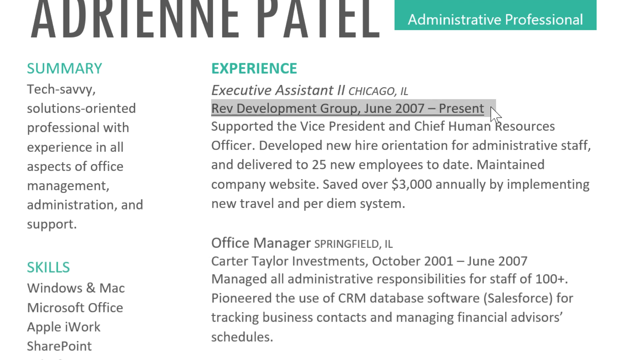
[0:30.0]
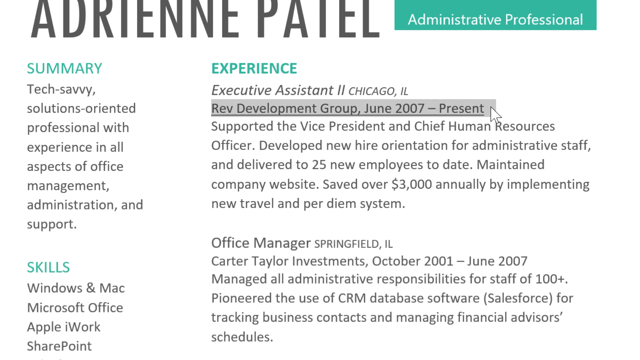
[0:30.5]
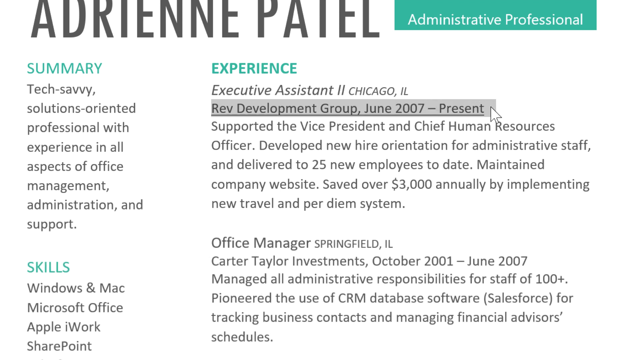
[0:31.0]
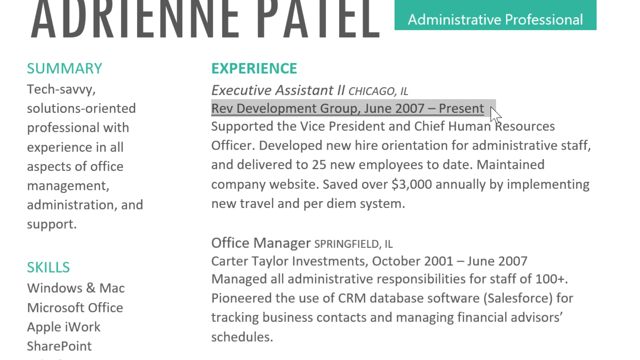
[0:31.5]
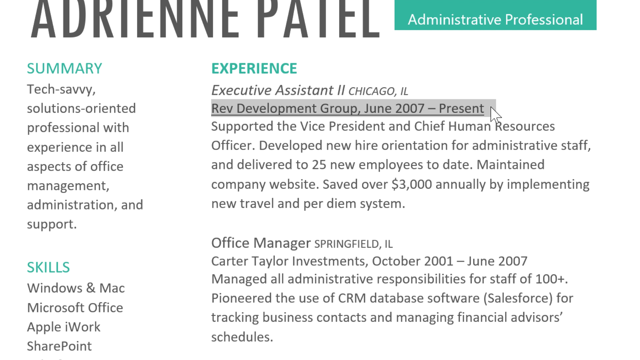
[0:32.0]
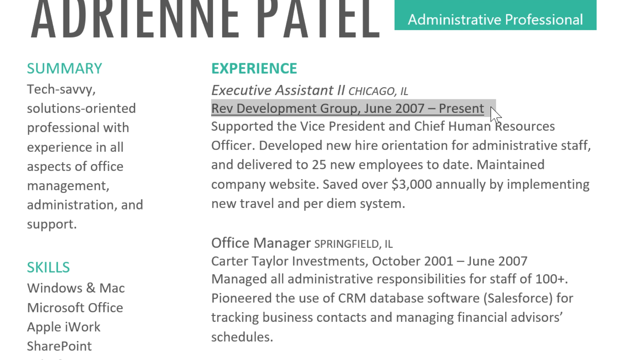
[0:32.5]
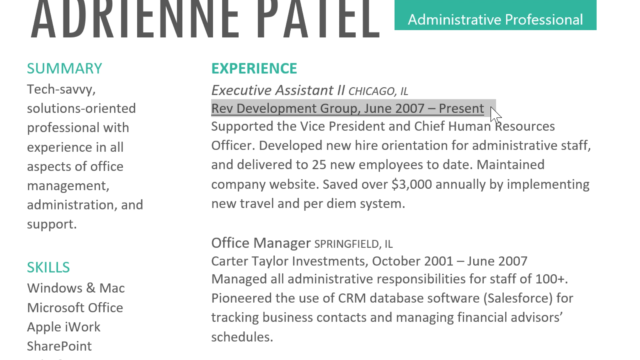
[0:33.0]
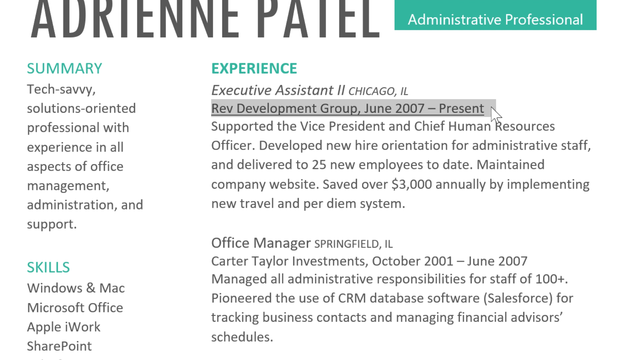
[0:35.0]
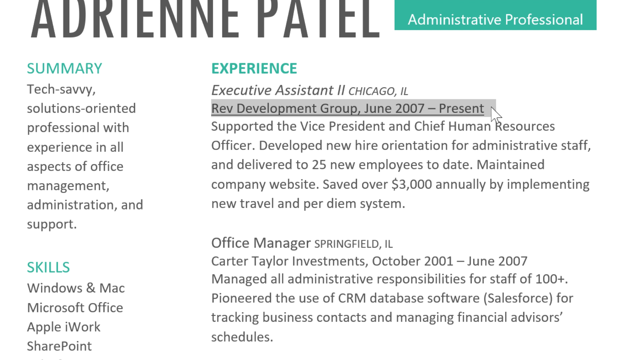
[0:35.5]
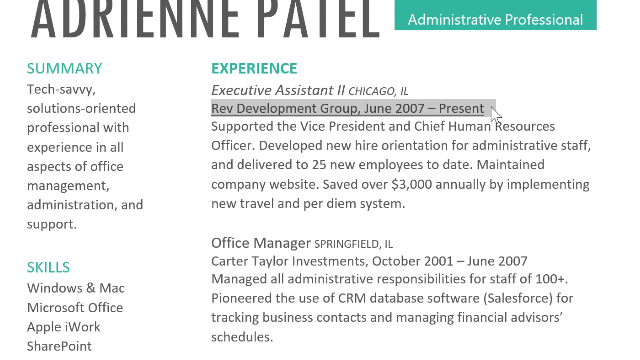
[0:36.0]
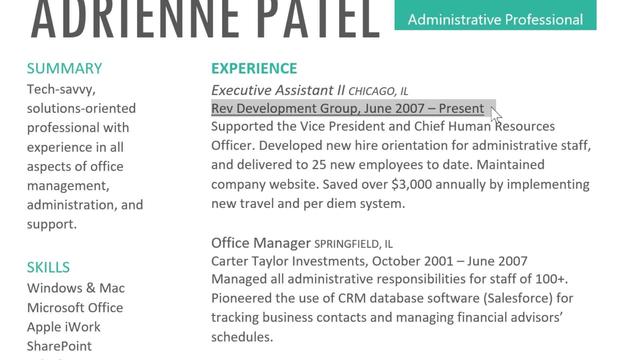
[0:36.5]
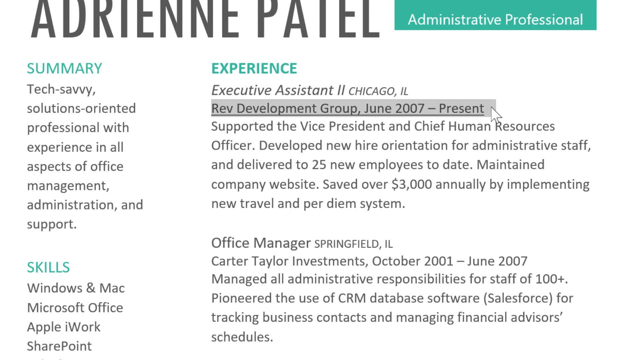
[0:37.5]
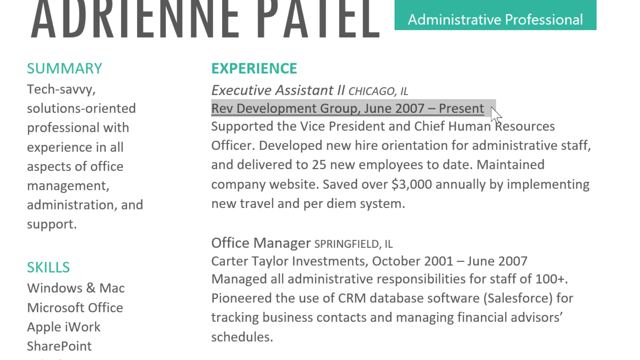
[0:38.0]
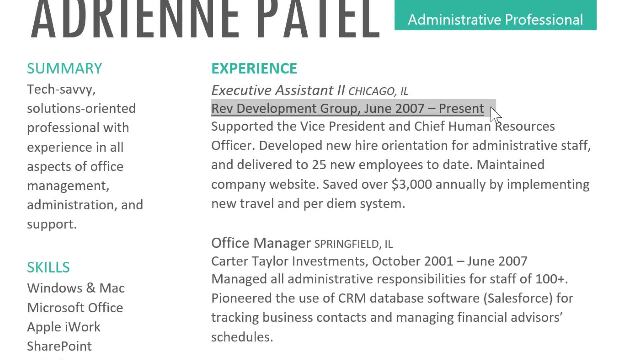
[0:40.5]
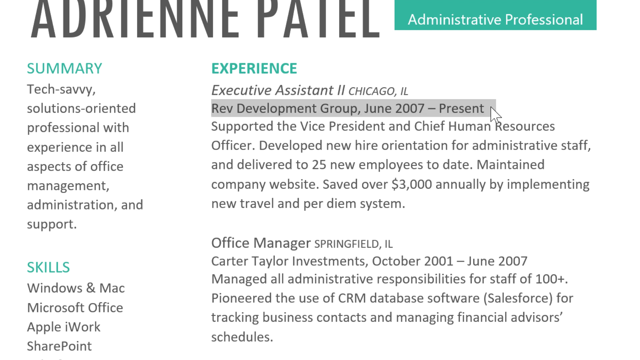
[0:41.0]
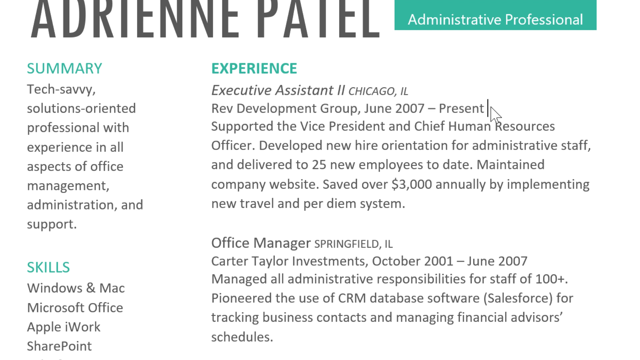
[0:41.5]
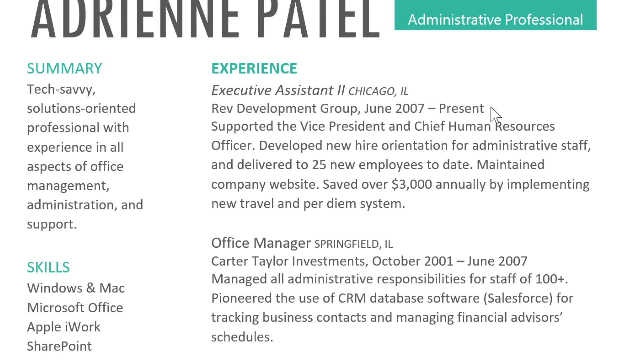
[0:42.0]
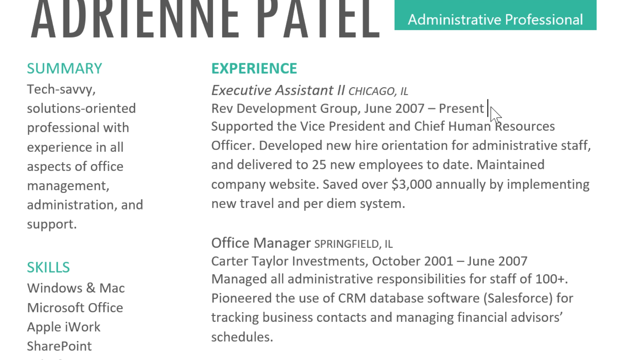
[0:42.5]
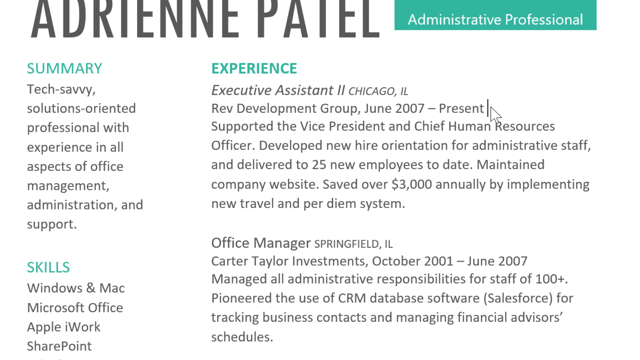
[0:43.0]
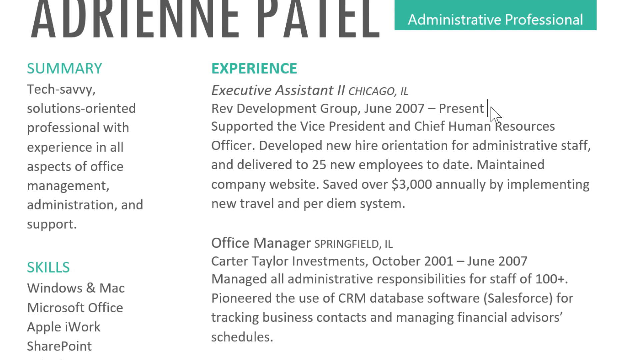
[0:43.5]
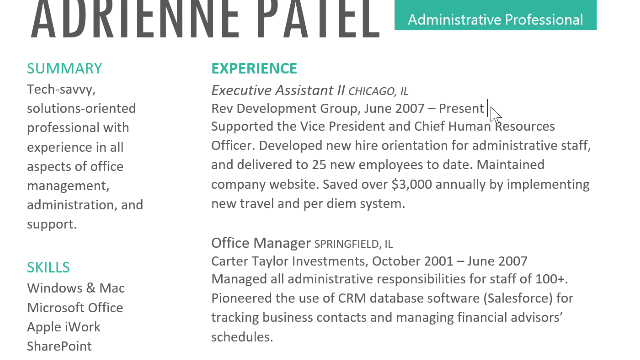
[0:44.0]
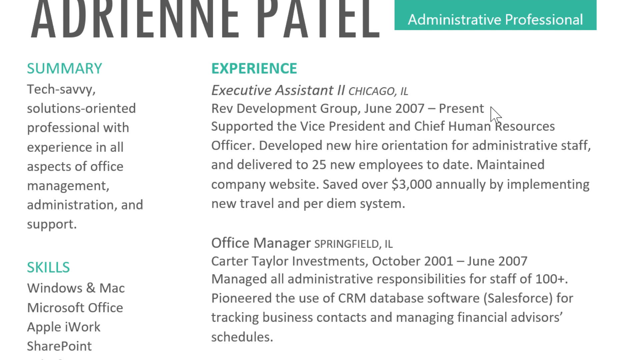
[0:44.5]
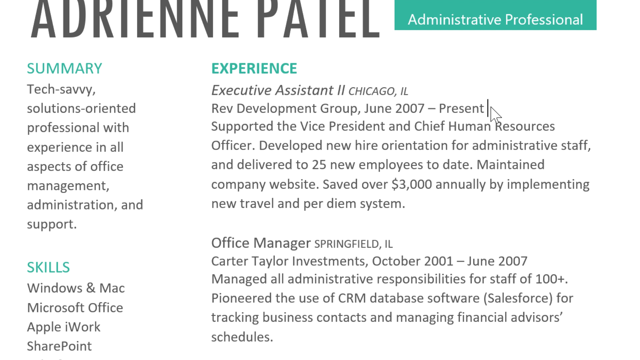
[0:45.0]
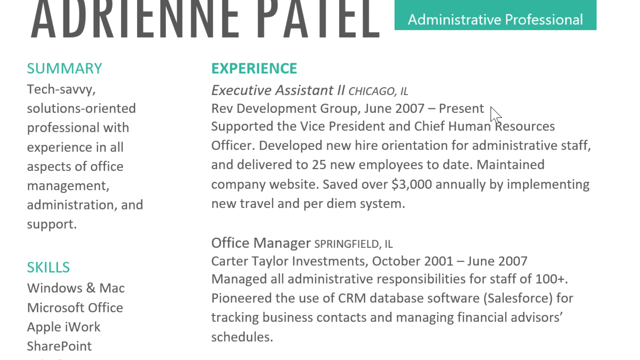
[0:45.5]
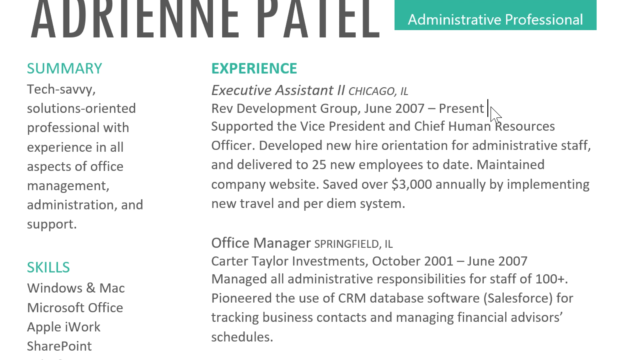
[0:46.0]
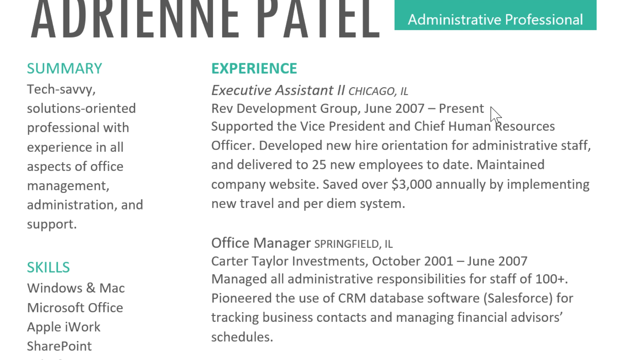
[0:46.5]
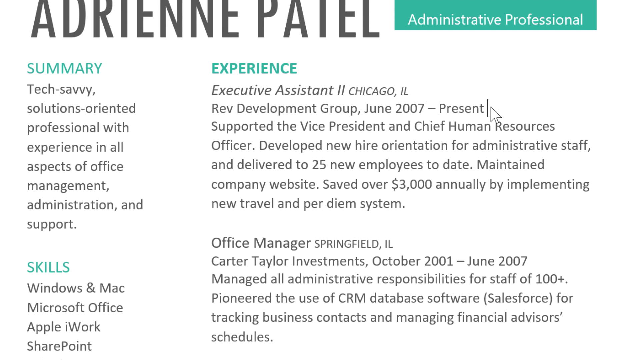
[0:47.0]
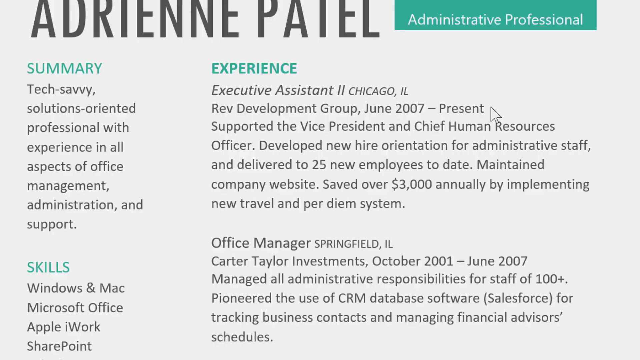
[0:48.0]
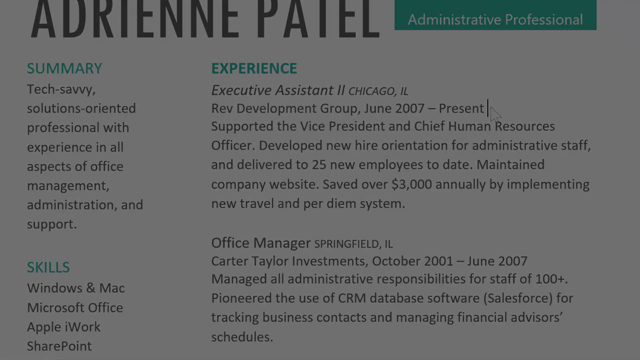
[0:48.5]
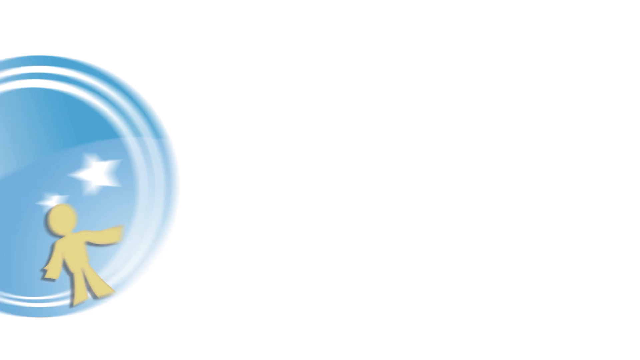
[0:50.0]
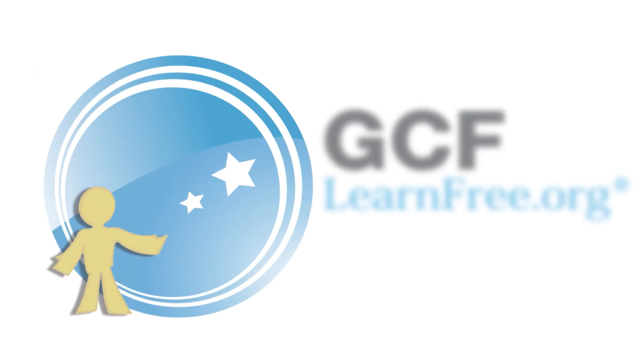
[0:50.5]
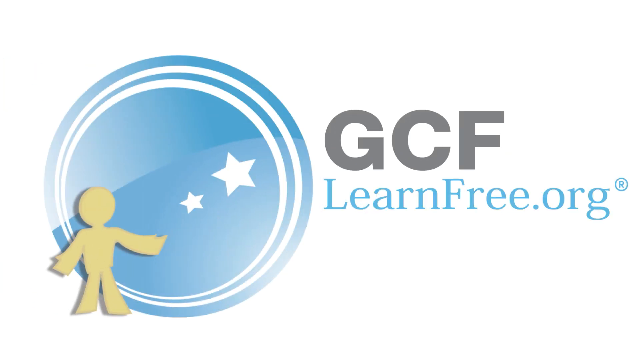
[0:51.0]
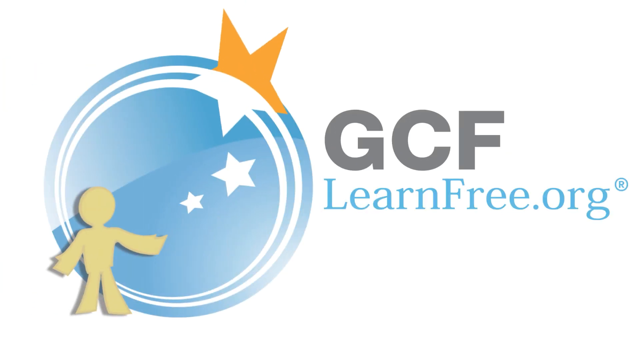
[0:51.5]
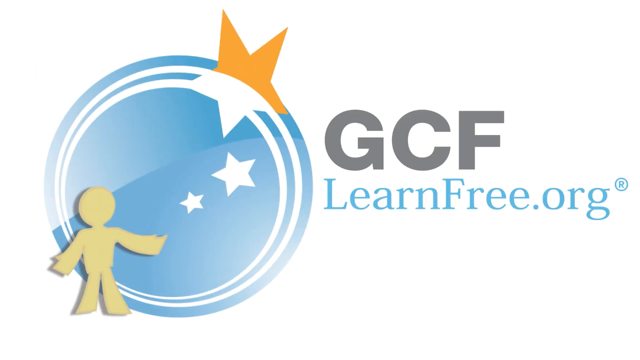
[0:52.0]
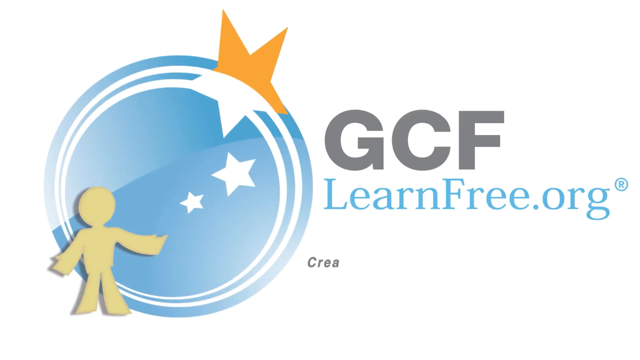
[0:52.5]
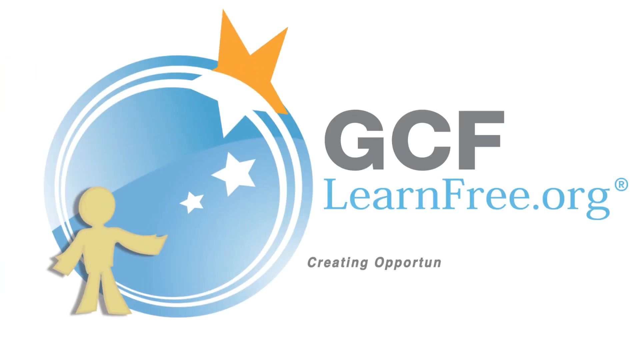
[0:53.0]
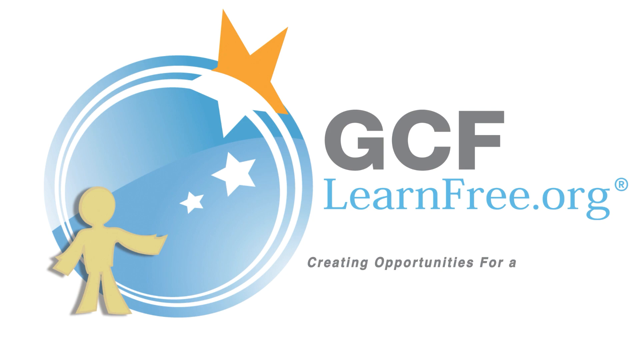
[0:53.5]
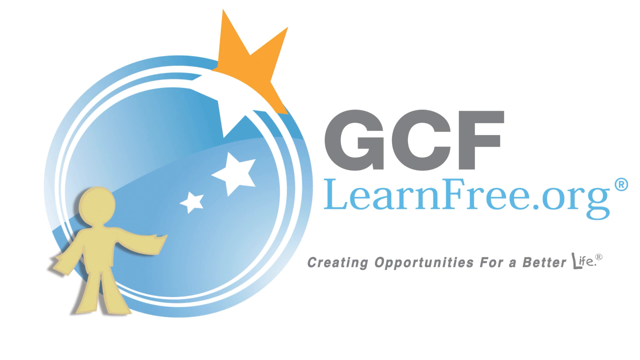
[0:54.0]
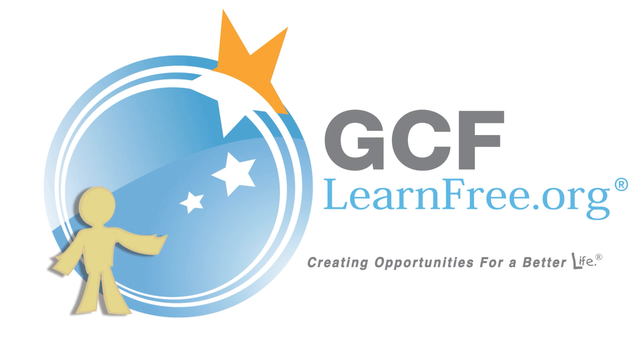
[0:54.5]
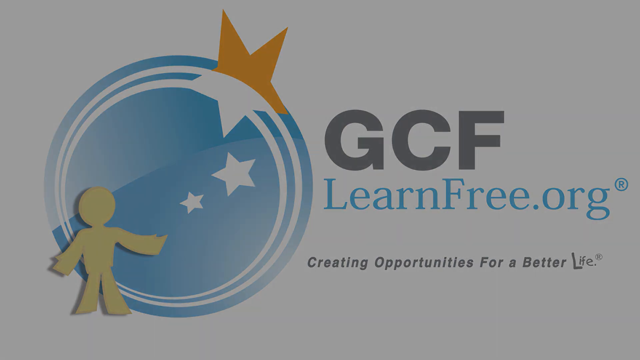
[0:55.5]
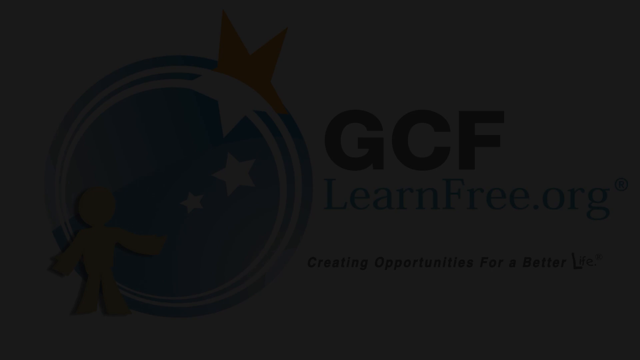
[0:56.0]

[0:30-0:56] Someone's CV is displayed with qualifications, skills, experience and a summary. The highlighting seems to focus mostly on important points under the experience section. Then the CV page changes to a page showing "GCF", possibly a company, with the text GCF learning free organization "creates opportunity for a better".